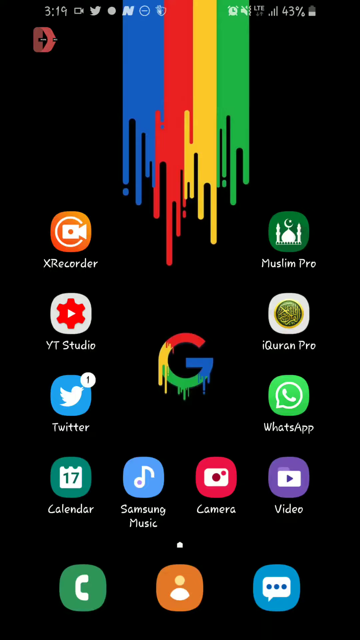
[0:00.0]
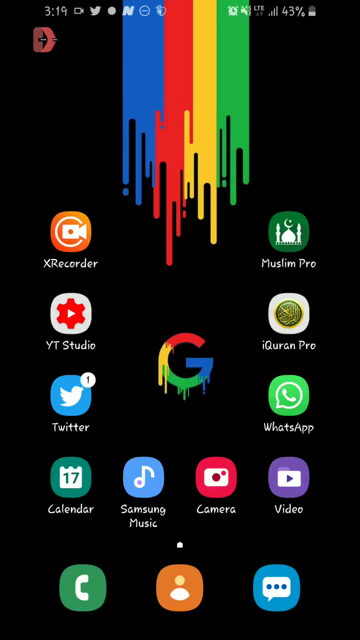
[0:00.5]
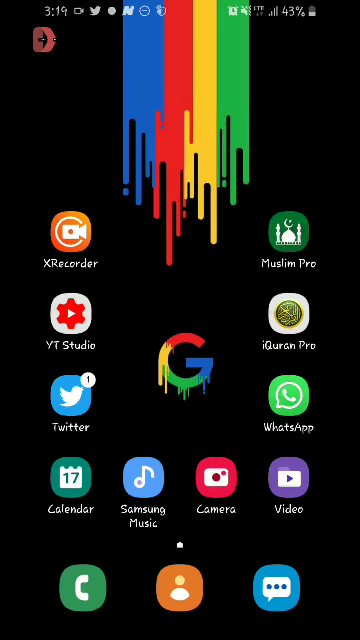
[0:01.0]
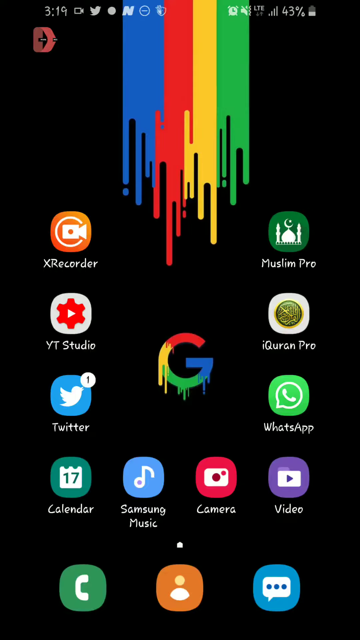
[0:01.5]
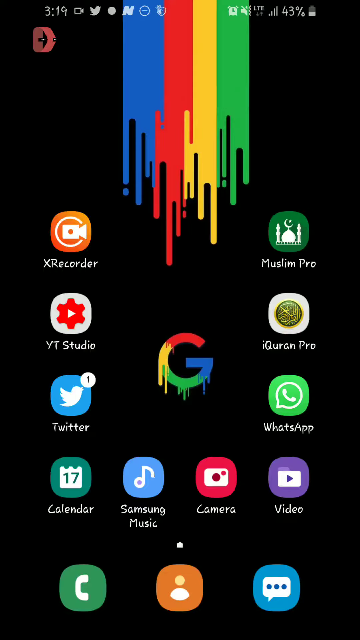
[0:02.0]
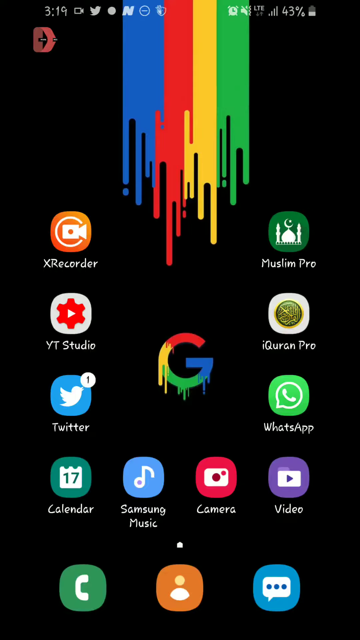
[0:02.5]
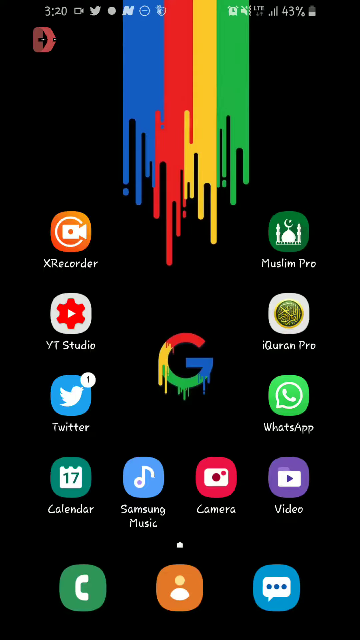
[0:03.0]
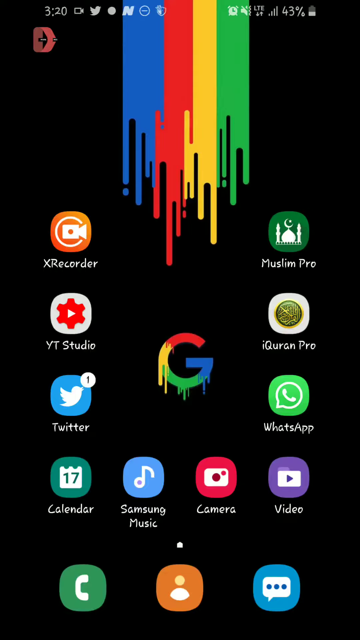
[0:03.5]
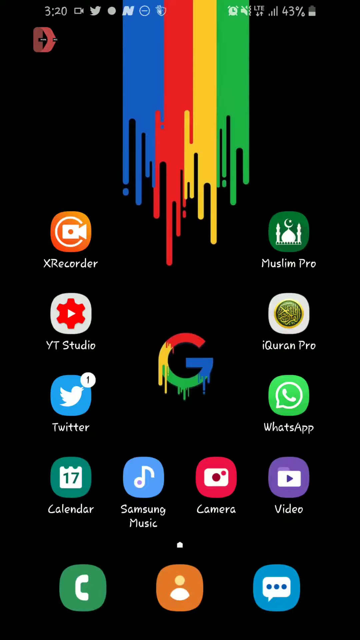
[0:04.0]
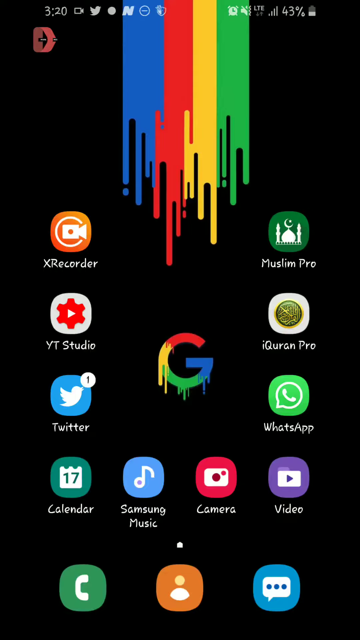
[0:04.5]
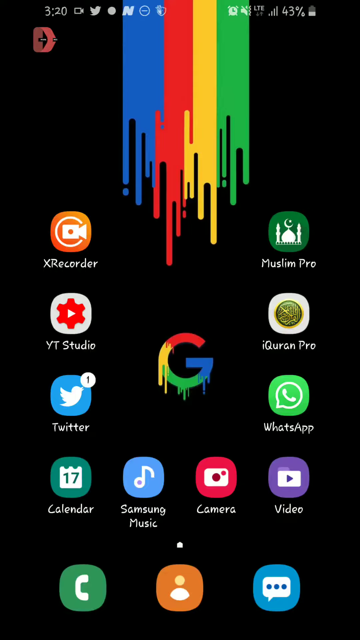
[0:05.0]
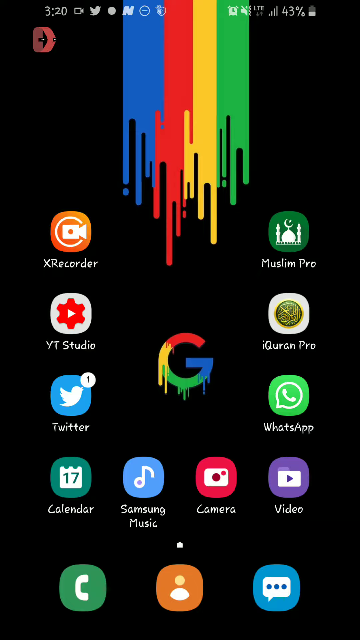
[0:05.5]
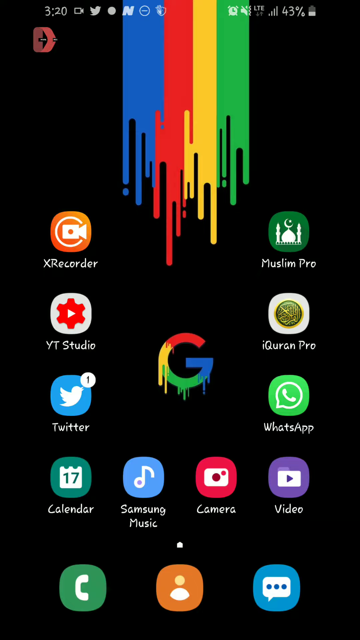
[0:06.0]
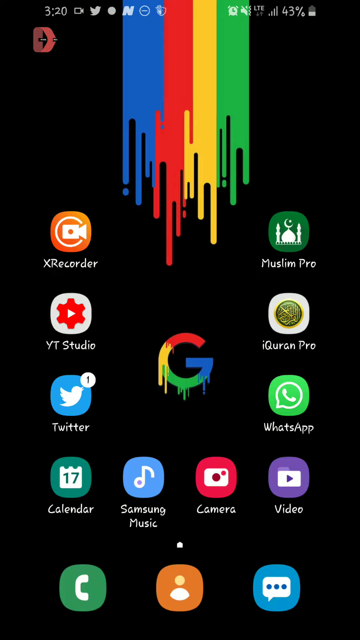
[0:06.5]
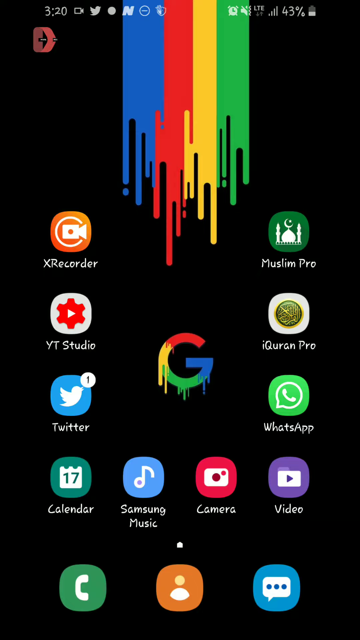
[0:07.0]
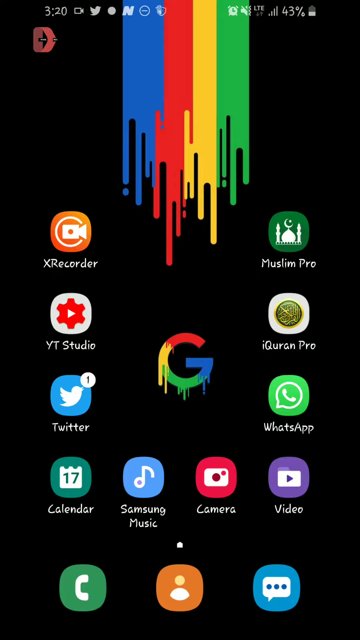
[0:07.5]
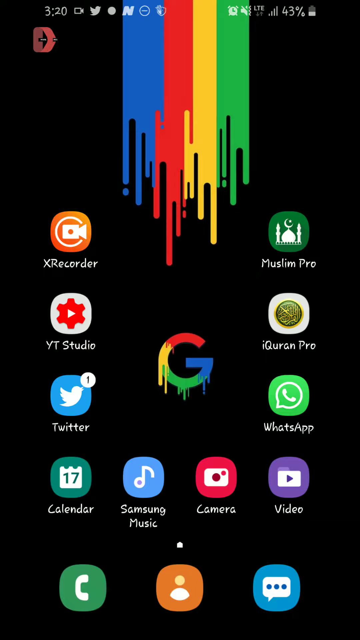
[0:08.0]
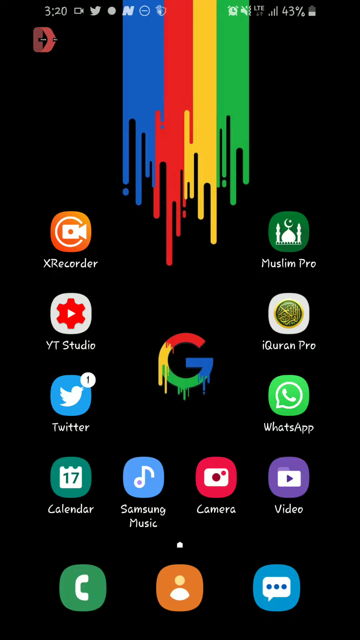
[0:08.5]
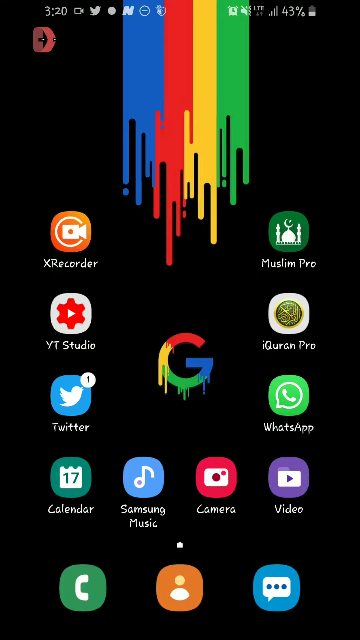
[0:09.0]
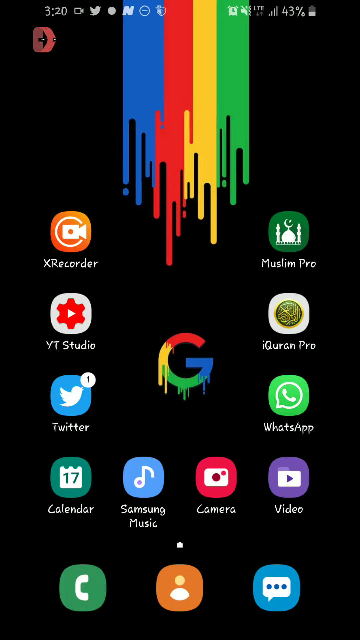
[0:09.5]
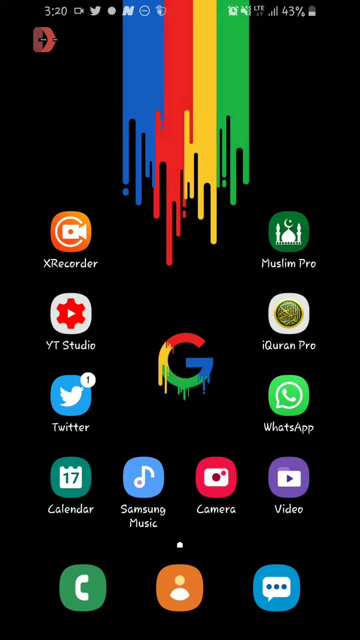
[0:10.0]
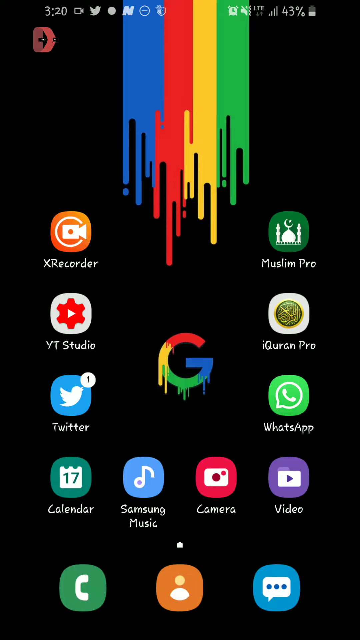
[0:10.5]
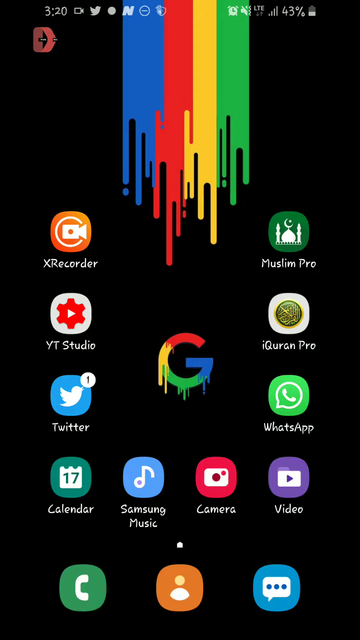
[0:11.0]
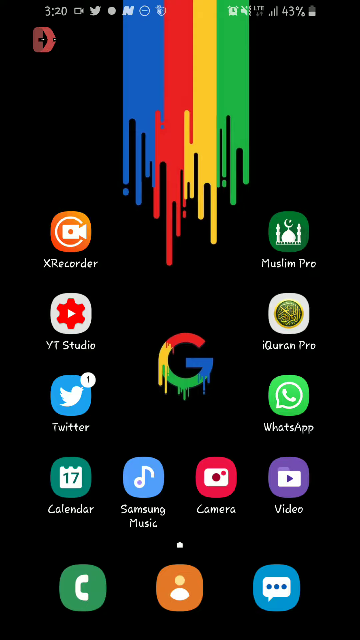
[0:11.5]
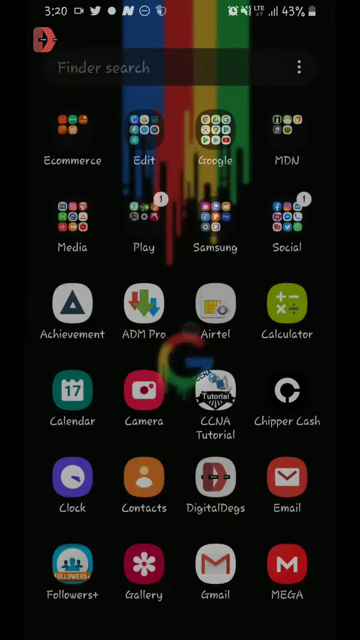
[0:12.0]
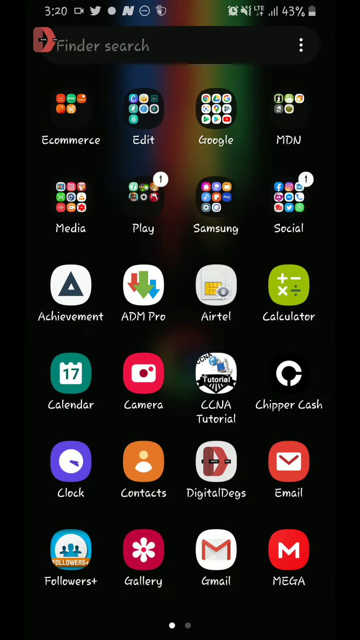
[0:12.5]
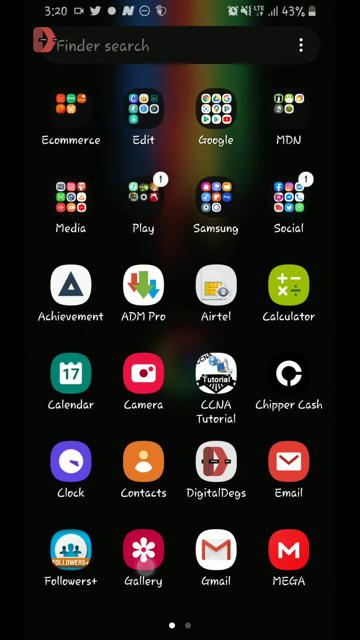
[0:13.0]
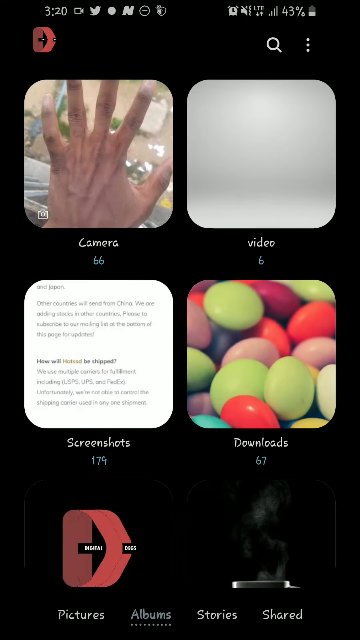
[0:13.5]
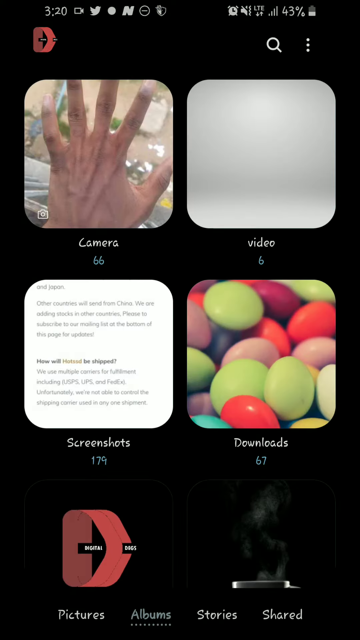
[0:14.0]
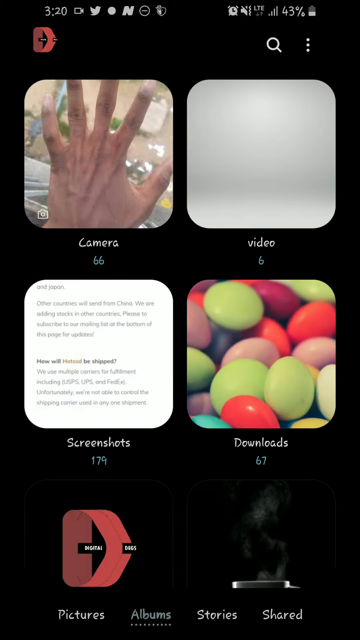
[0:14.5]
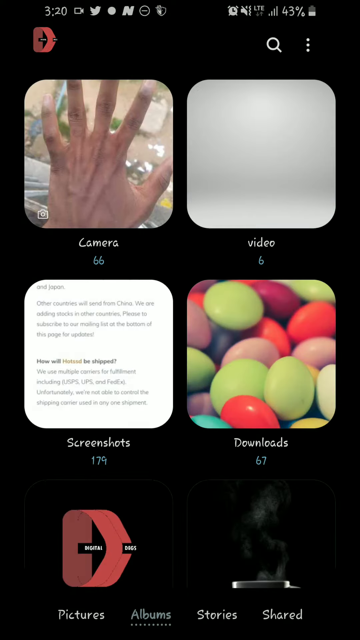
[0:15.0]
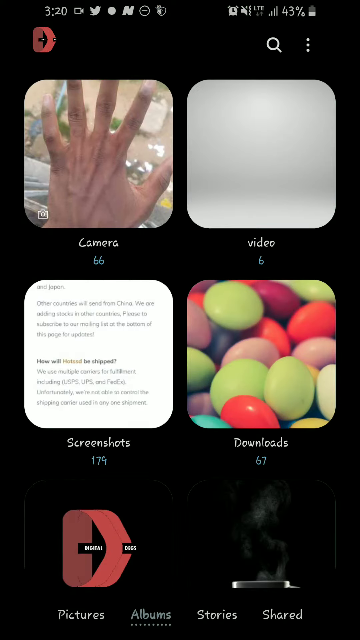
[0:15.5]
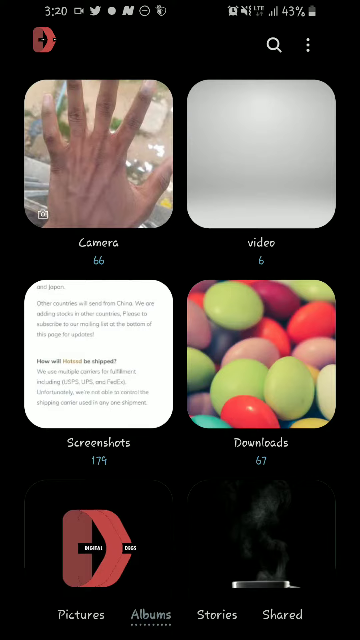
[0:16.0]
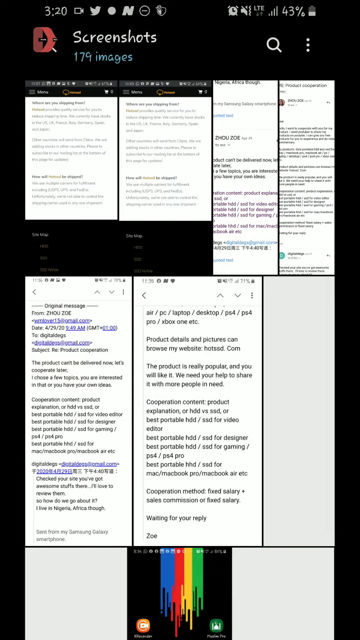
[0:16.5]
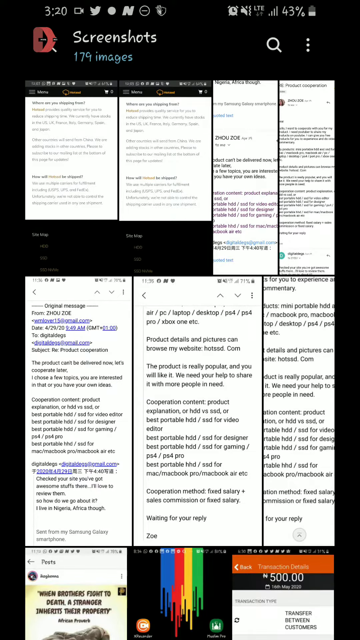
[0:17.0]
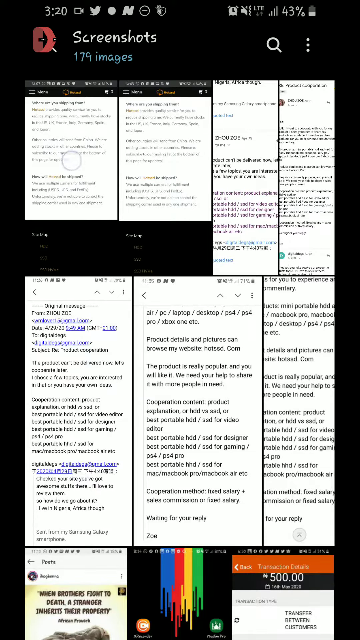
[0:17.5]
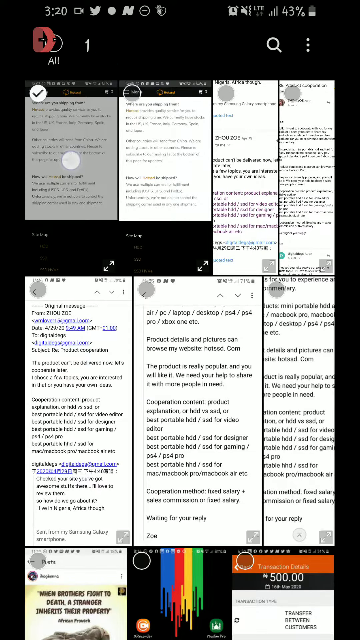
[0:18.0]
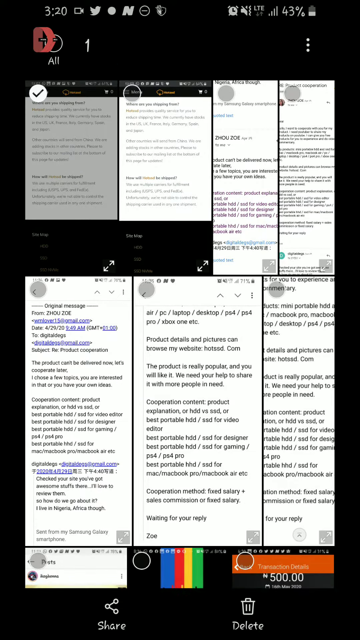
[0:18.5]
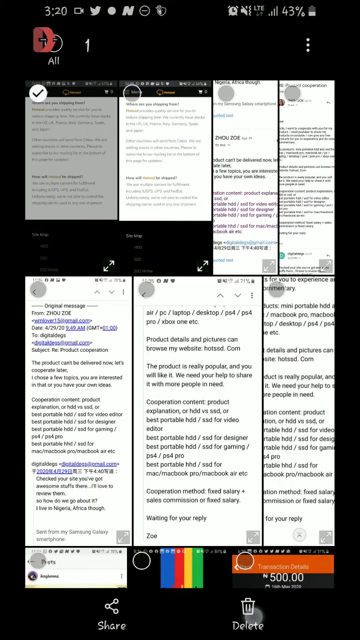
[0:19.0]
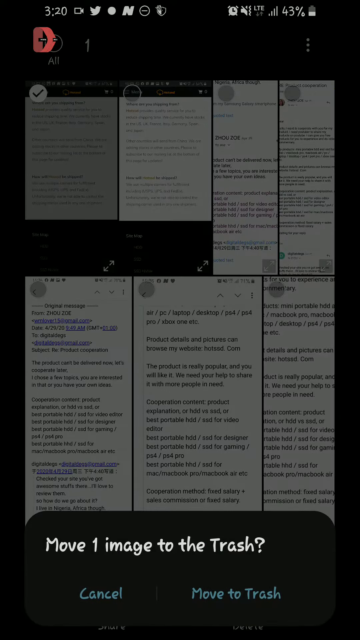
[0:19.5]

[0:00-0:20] The video opens on an Android phone's home screen, which has what looks like a dripping paint background and the Google symbol in the very middle. On the left side are the apps XRecorder, YouTube Studio, Twitter and Calendar; on the right are Muslim Pre, iKoran Pro, WhatsApp and video; along the bottom are Samsung Music and camera, and further down are phone, contacts and messenger. He scrolls up to show all of the apps and selects the gallery app from the list. The gallery loads and quickly shows a screen of folders: camera, video, screenshots, downloads and one last folder. He taps on screenshots, where there are a bunch of screenshots, and selects the first one.